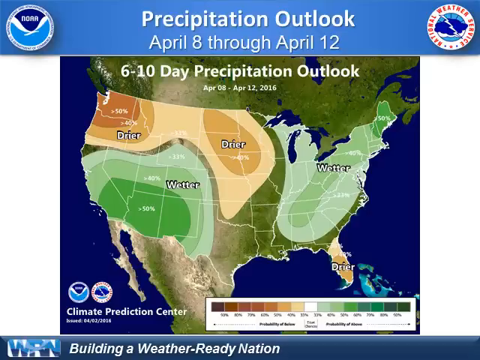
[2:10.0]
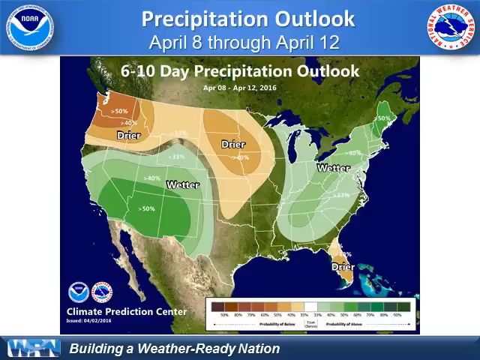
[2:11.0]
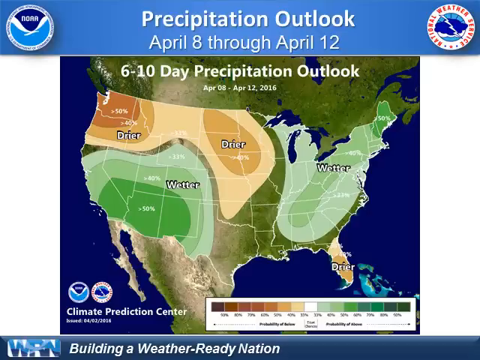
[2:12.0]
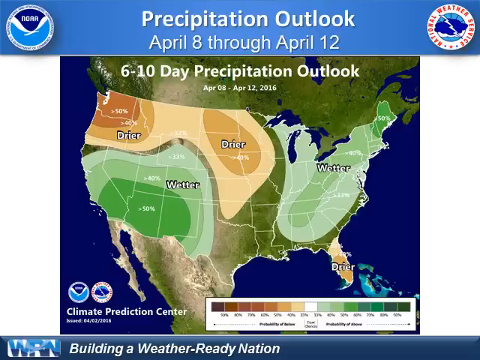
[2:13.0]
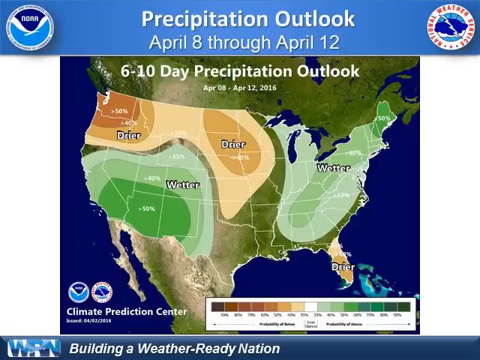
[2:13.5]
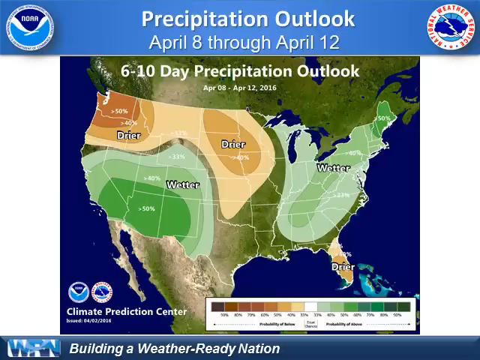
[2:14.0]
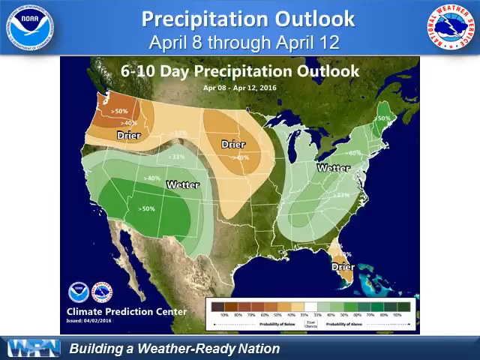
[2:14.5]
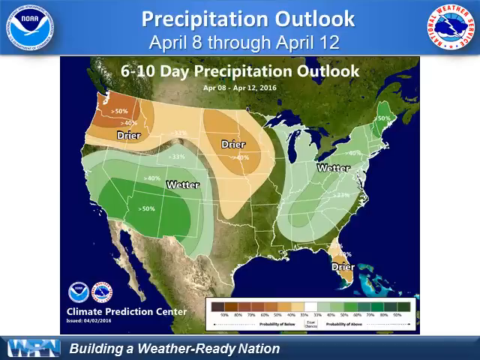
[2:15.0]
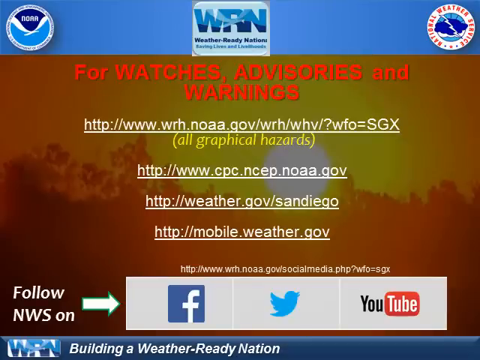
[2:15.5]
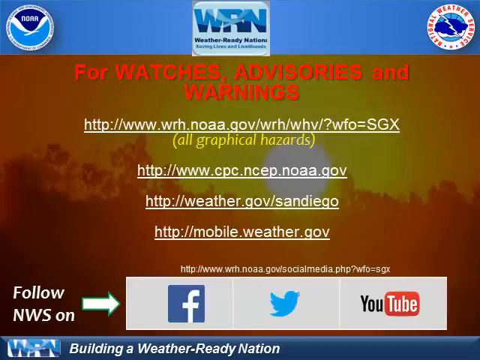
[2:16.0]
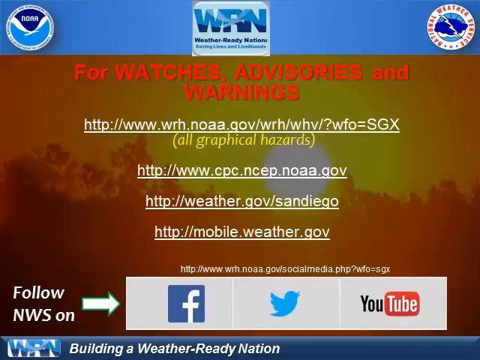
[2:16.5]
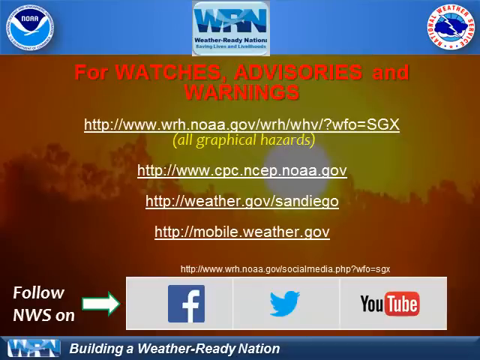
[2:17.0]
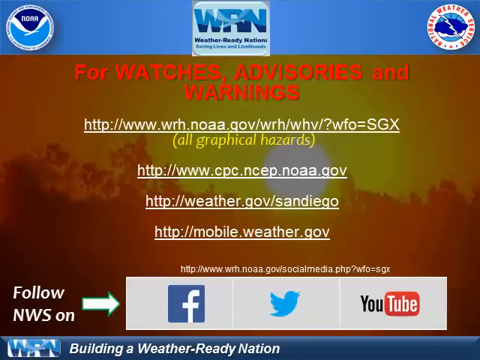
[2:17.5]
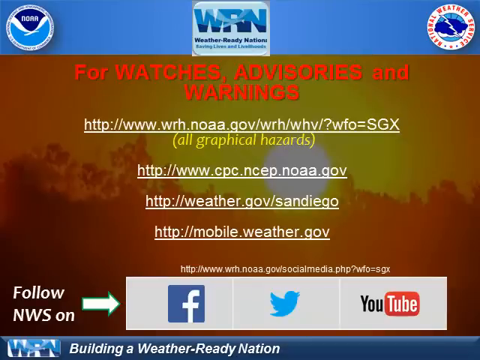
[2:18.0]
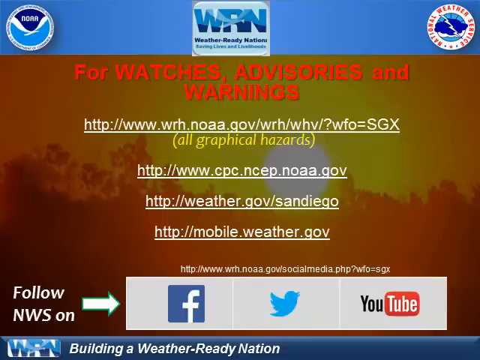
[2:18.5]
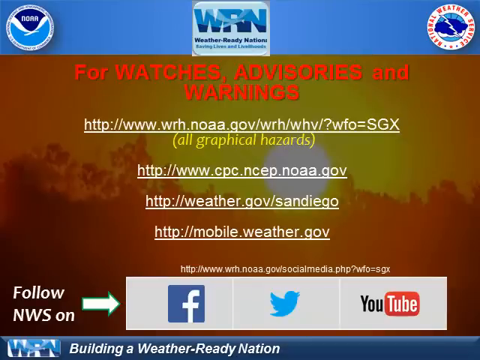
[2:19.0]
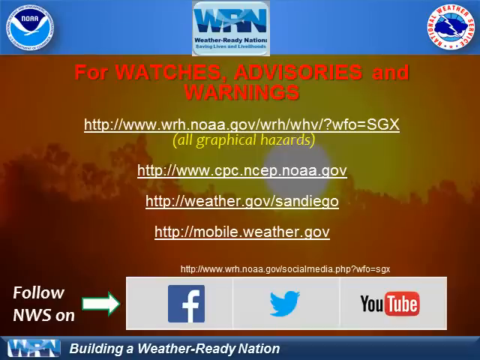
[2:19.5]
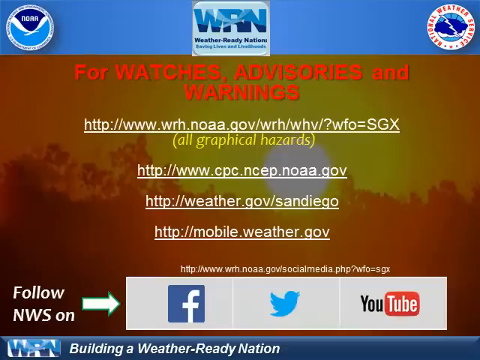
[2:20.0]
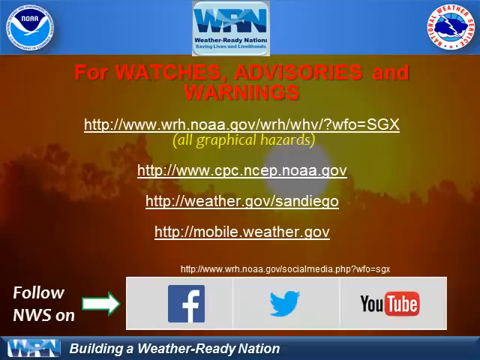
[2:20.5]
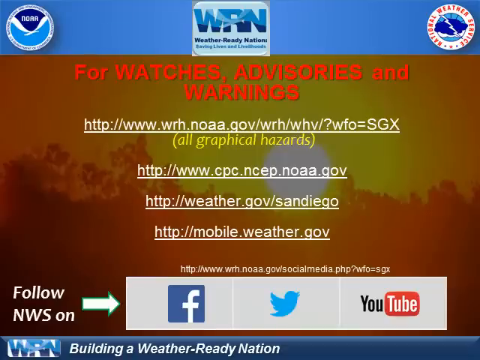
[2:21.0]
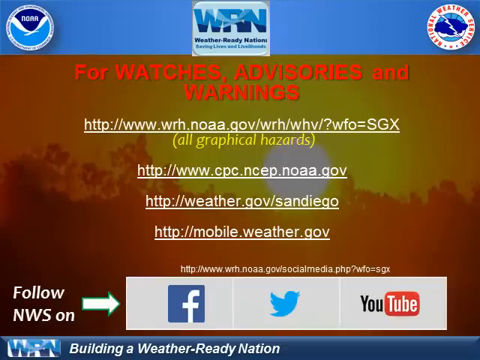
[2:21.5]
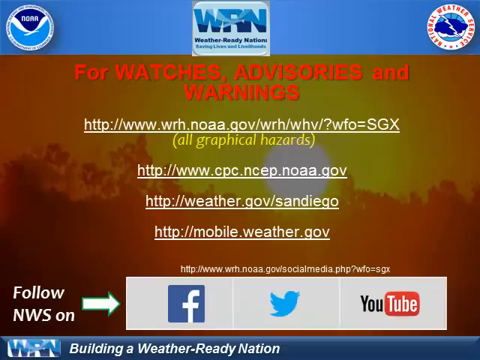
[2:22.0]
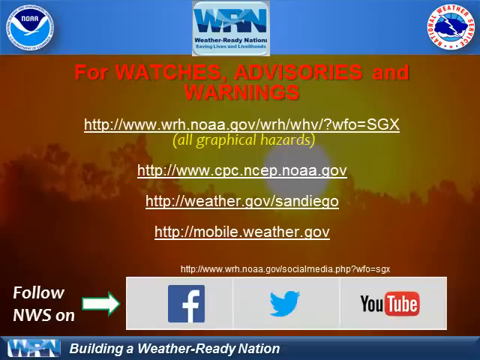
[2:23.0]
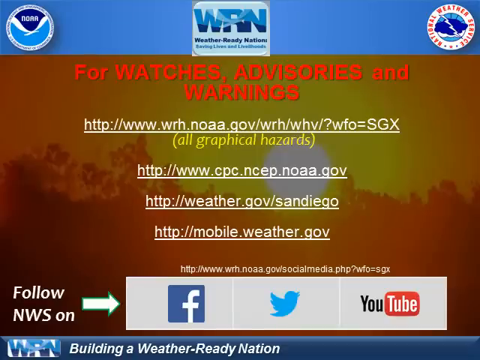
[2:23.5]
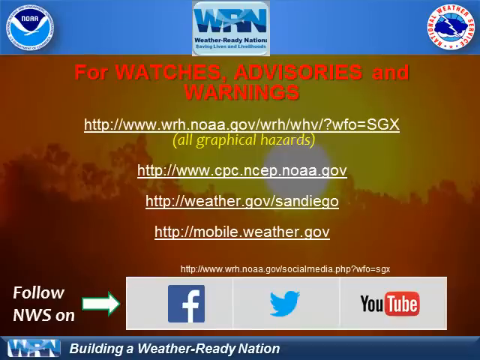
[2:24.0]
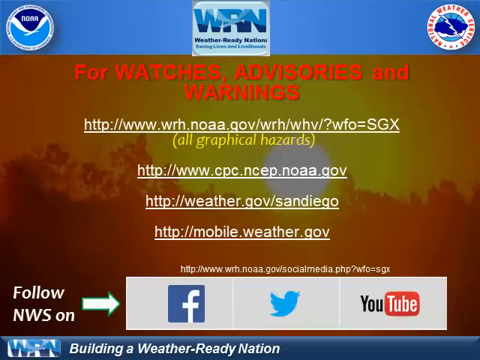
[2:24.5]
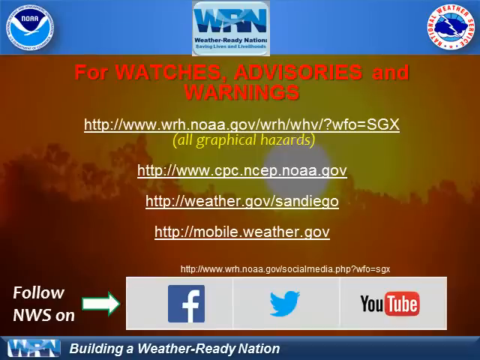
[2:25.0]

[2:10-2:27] A weather forecast shows the National Weather Service logo on the right, a dark cloud overlapping a light cloud with a lightning bolt through it, and the NOAA logo on the right as well. In the lower left-hand corner it says "Climate Prediction Center" with the two logos, and to the right in the lower part is a key for the outlook, wetter or drier, going from dark brown to dark green. The map shows the contiguous lower 48 U.S. states divided by their borders, indicating which are wetter and which are drier. The drier states are mostly in the northwest and the midwest, plus the southern tip of Florida. The wetter states stretch from California across to Texas in the southwestern states, and most of the East Coast is wet. Wetter areas are green and drier ones are brown or beige. The slide then shows four links, saying "for watches, advisories, and warnings", with links to the NOAA site, the CPC site, the weather.gov site, and the mobileweather.gov site.